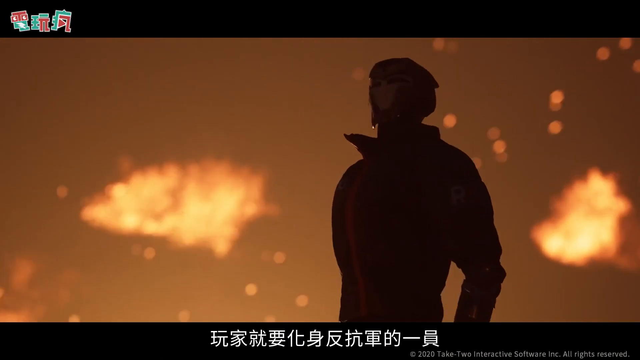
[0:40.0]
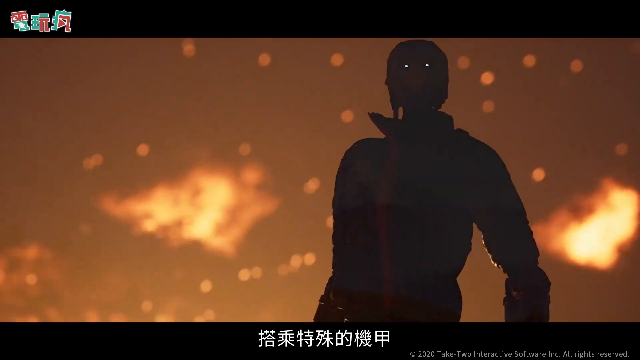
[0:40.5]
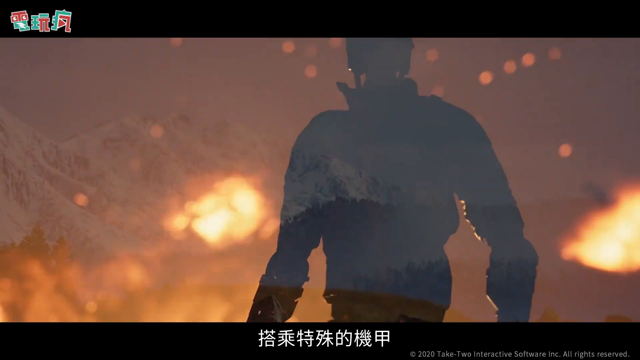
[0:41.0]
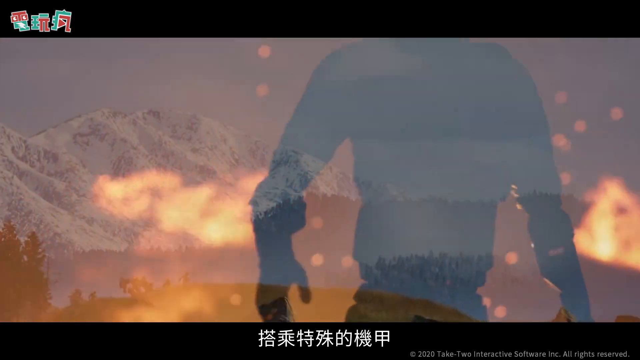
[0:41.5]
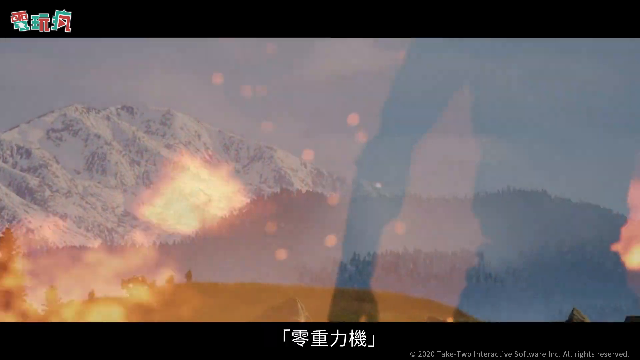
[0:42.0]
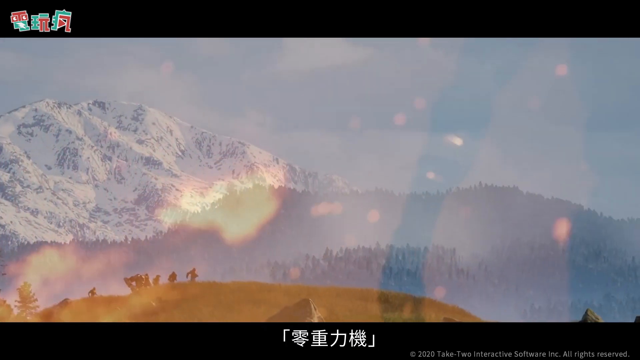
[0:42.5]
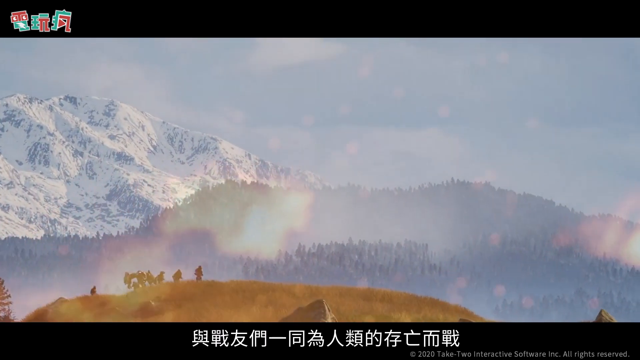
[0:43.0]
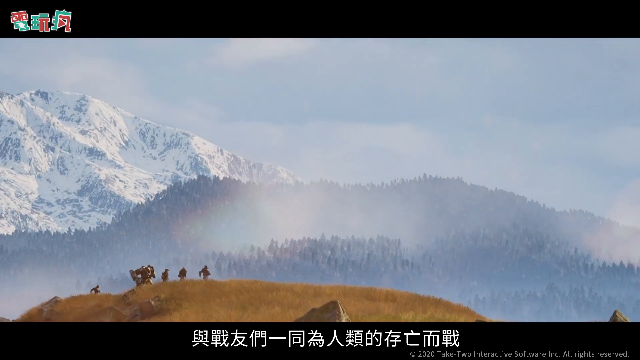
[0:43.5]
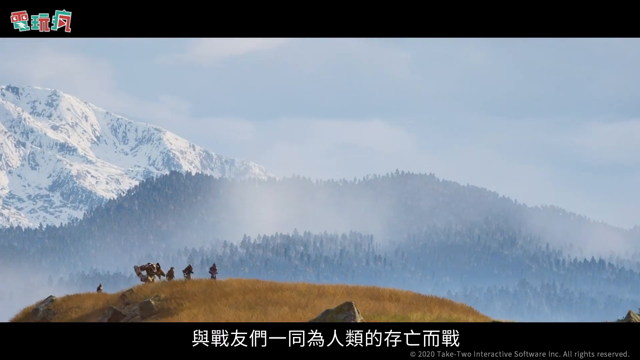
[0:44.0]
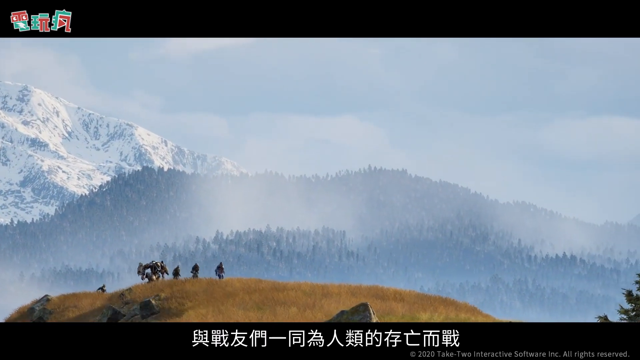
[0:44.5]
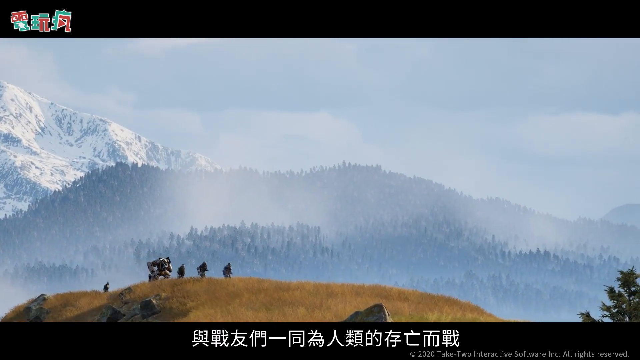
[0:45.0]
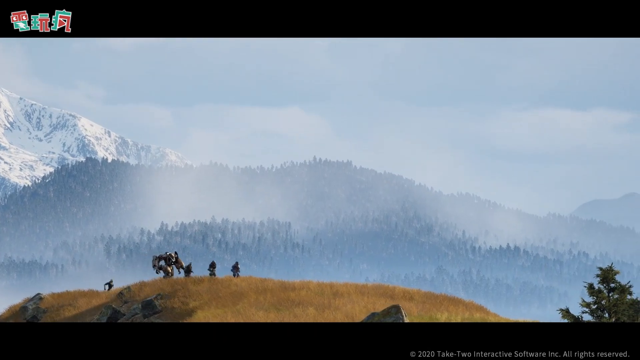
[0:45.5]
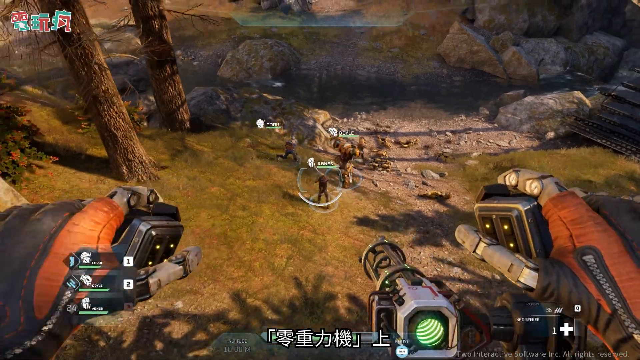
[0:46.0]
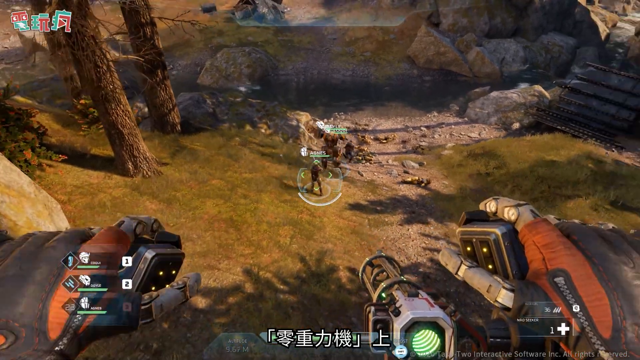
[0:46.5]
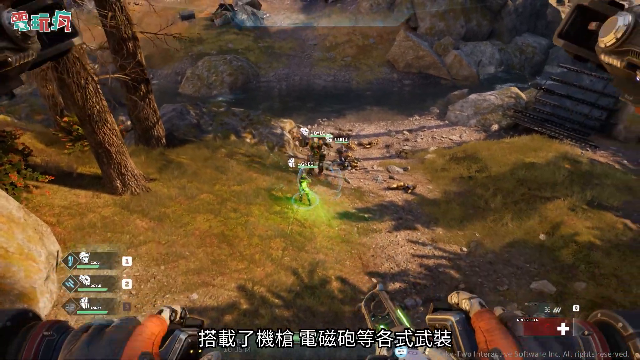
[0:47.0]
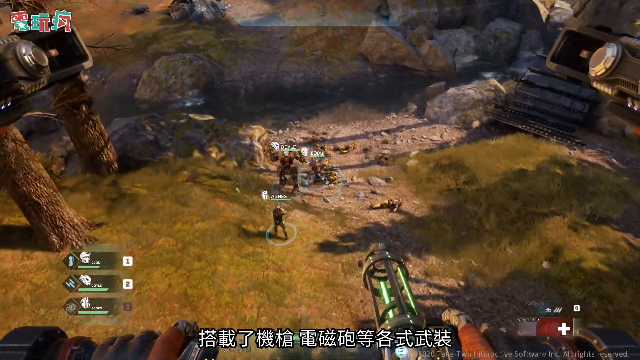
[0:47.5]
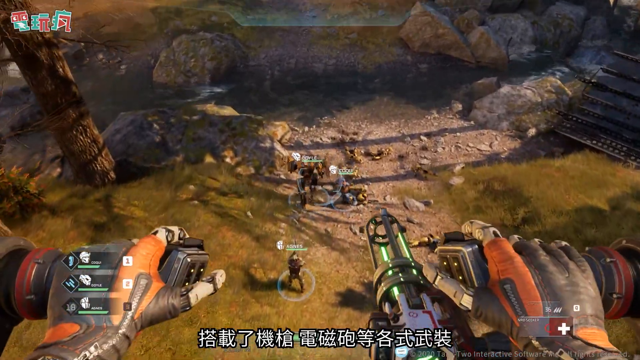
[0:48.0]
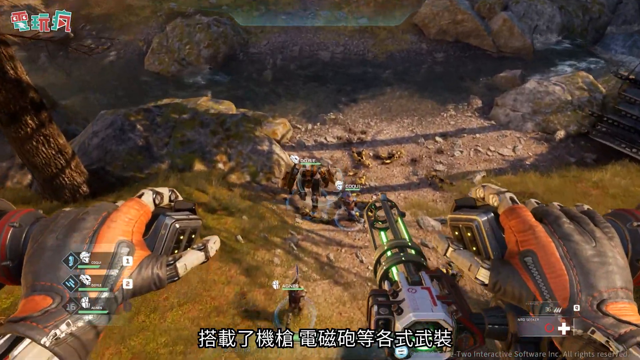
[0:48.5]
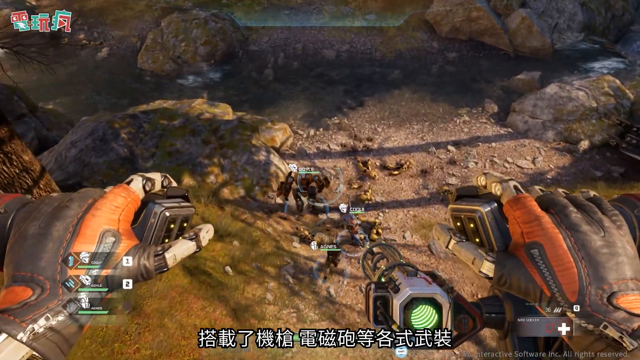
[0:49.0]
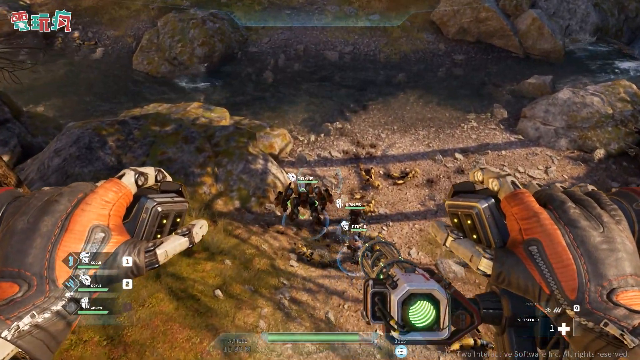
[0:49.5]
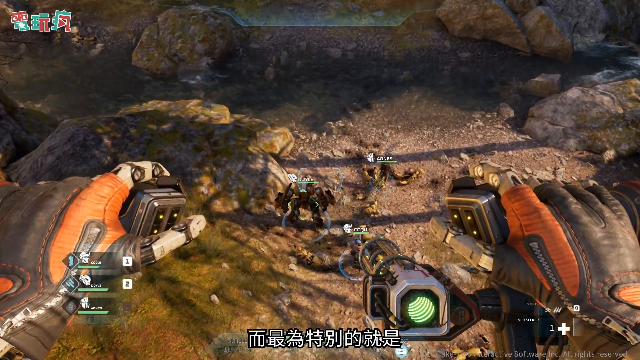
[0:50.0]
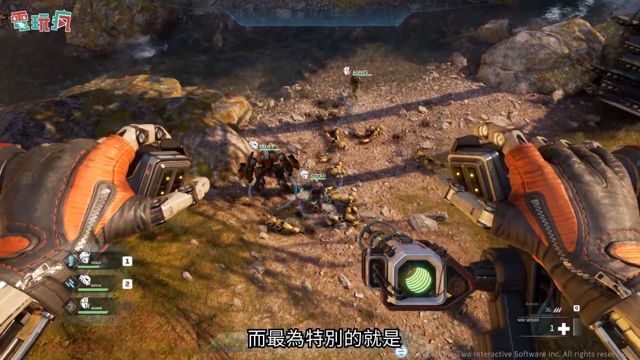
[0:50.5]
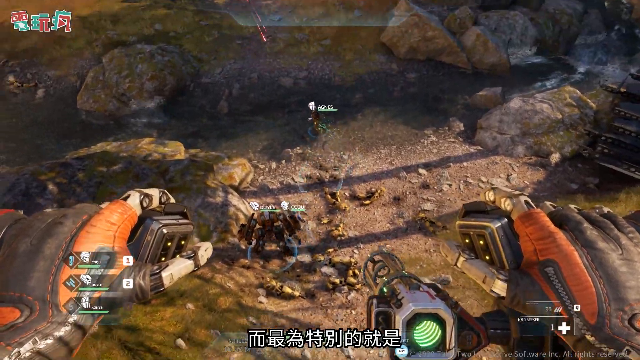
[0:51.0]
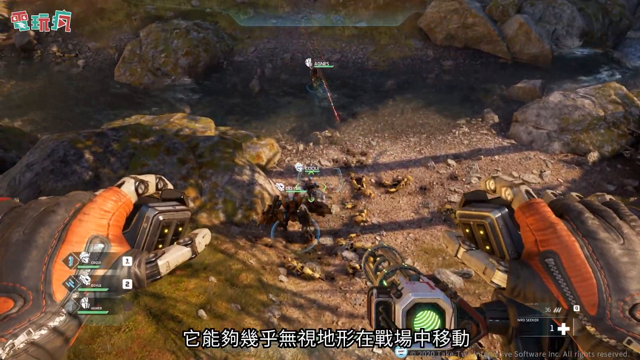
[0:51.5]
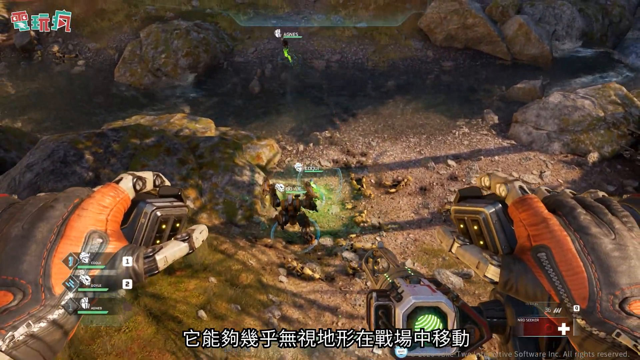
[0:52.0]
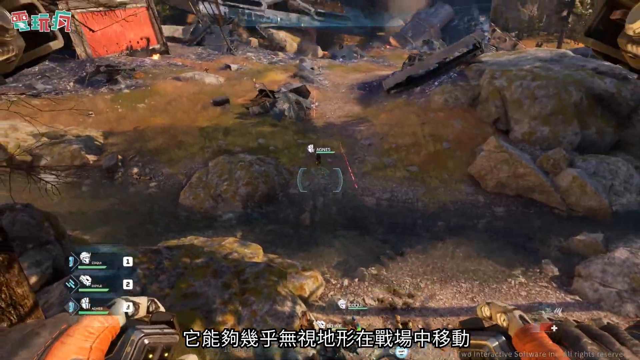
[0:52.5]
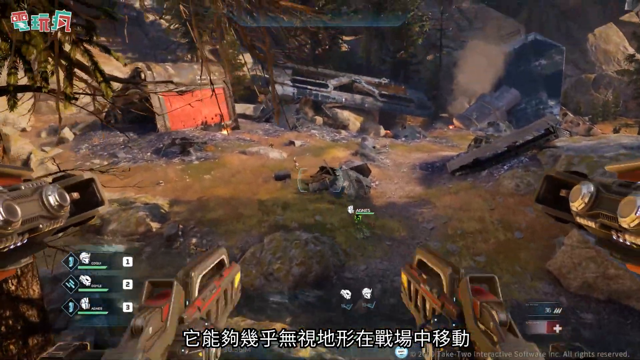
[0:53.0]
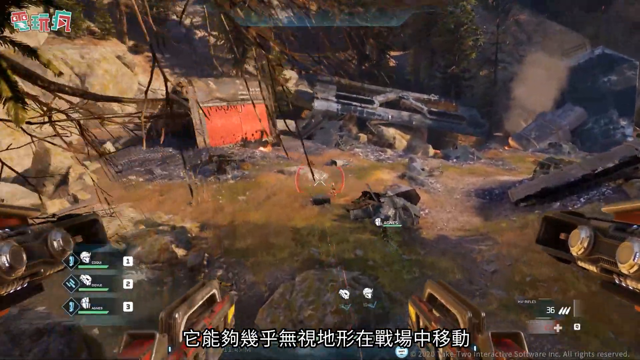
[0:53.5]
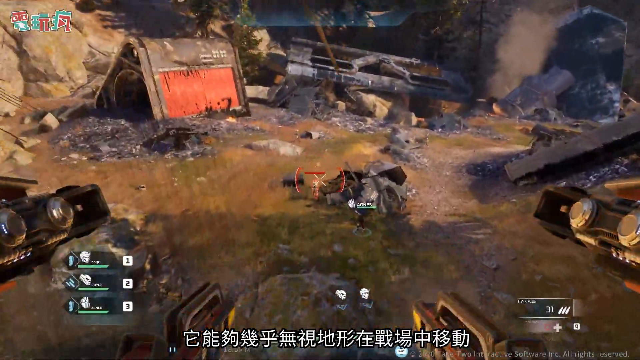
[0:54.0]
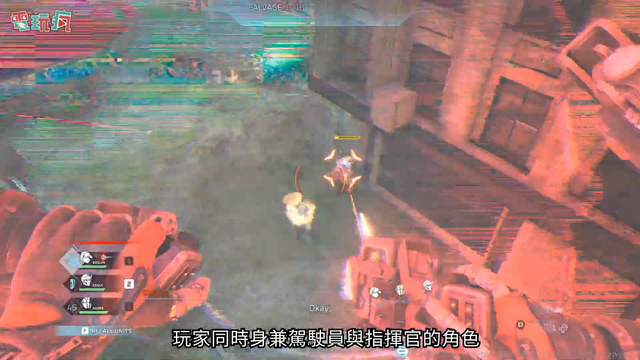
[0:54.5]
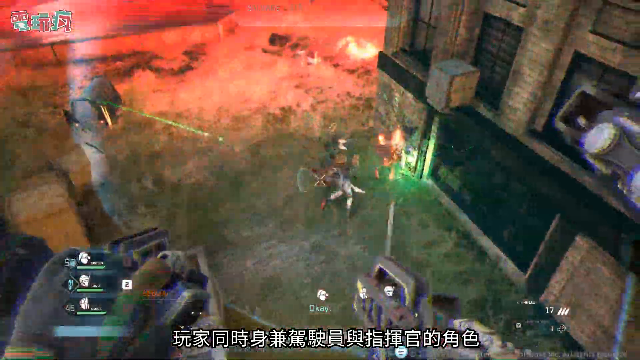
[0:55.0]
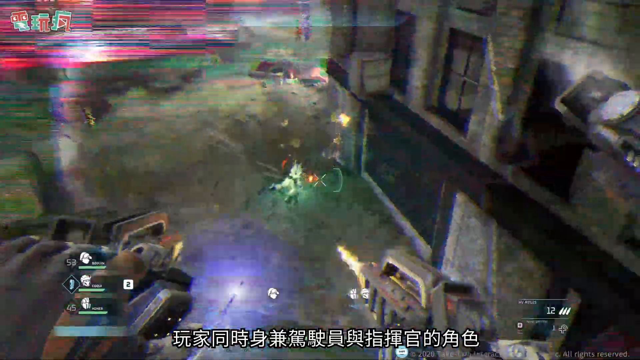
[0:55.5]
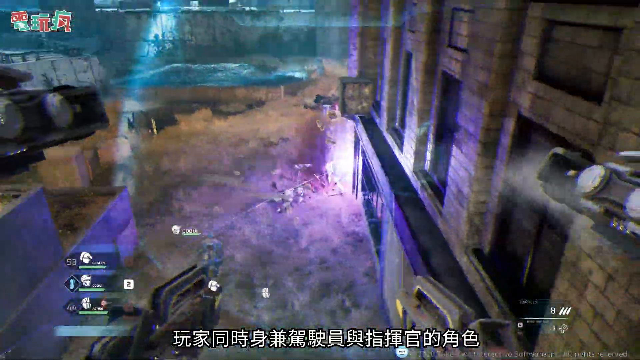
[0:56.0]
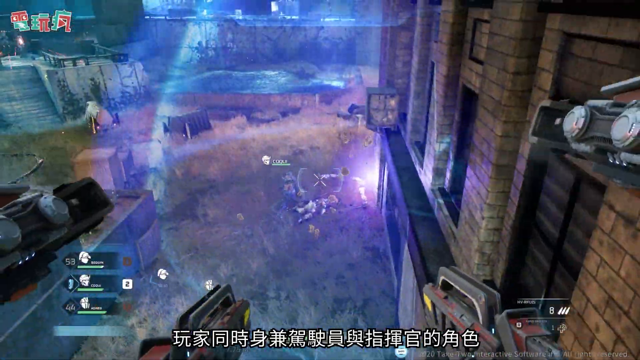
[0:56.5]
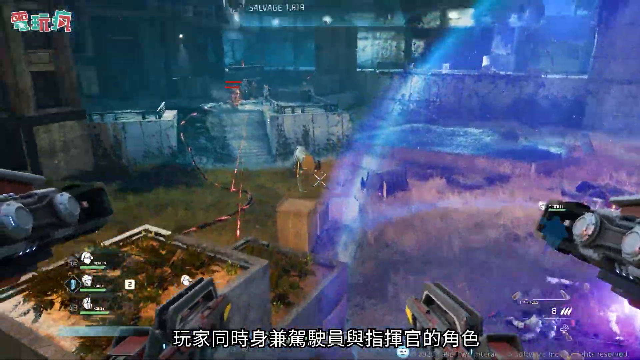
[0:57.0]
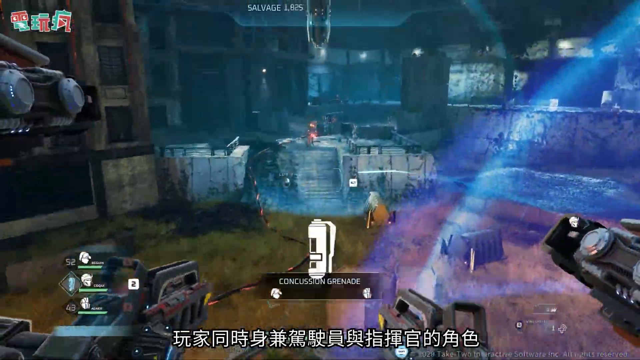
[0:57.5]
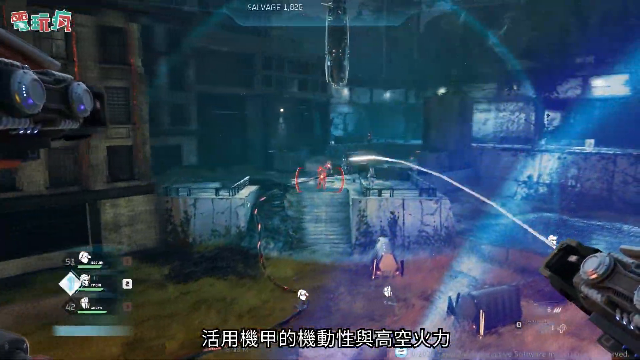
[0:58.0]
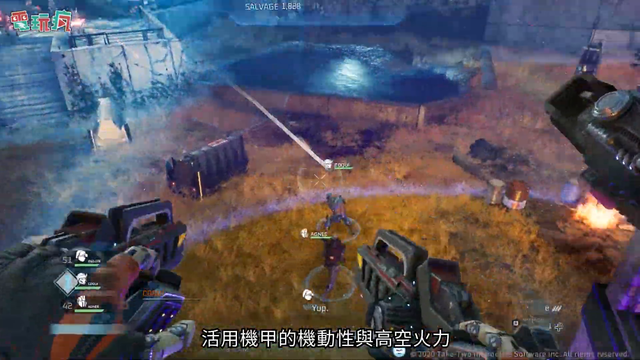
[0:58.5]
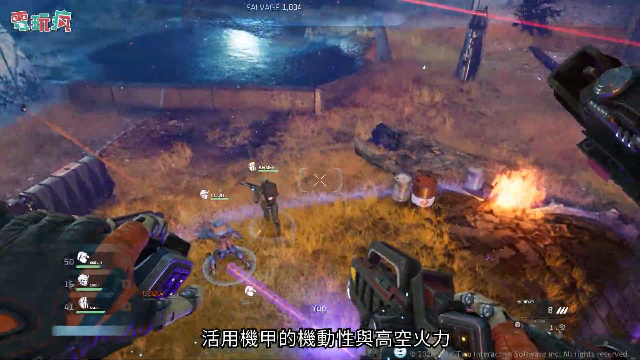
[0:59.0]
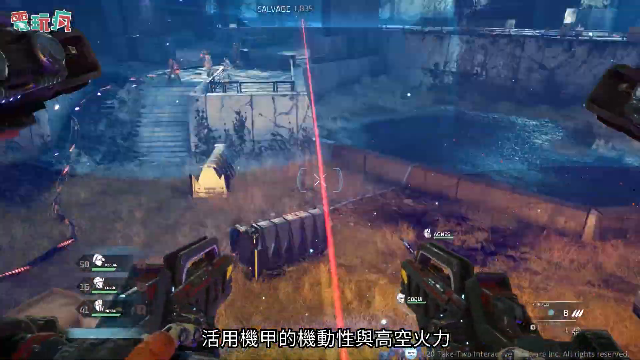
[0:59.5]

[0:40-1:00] After the fiery scene, a hill at the bottom of the screen shows many characters. Behind them are rows of mountains covered in trees, with one on the left side that is very snowy. The game returns, with the guns at the bottom and the crosshairs in the middle, now in an outdoor forest scene with some trees and large boulders. The fighting takes place in a kind of grassy clearing. Tiny characters are being shot at and are shooting at the player, and there is a stream in the middle that they run across. More static appears before another level of the game: a gritty, dark urban scene surrounded by dingy buildings. There is quite a bit of back-and-forth shooting. The screen has a sort of grayish-blue pallor, with little blue lines running throughout the action.